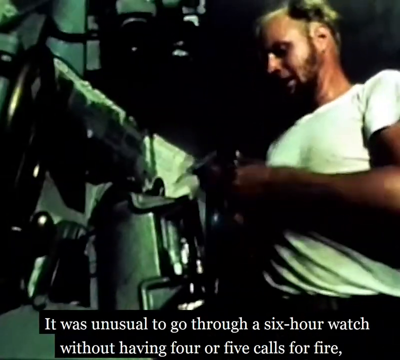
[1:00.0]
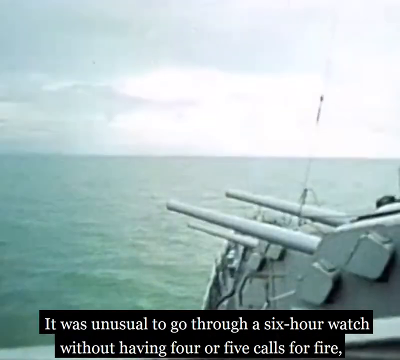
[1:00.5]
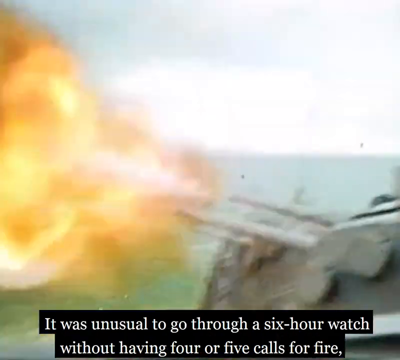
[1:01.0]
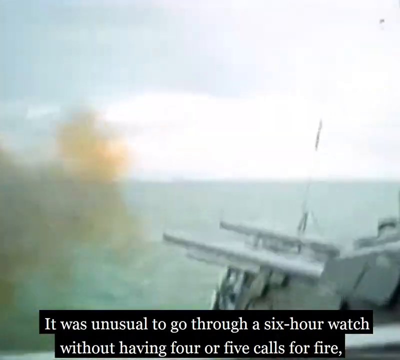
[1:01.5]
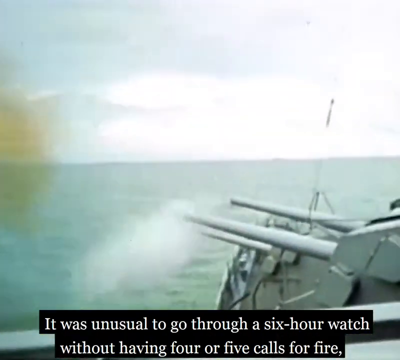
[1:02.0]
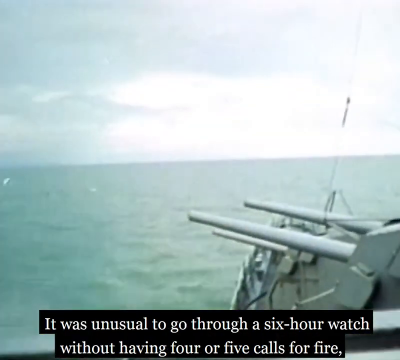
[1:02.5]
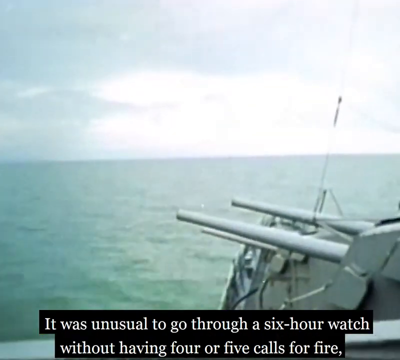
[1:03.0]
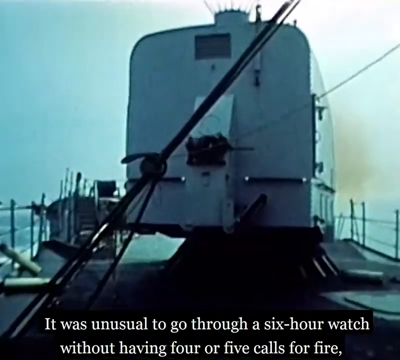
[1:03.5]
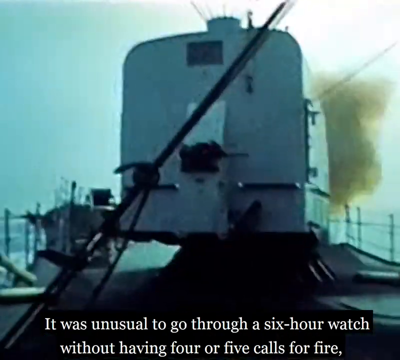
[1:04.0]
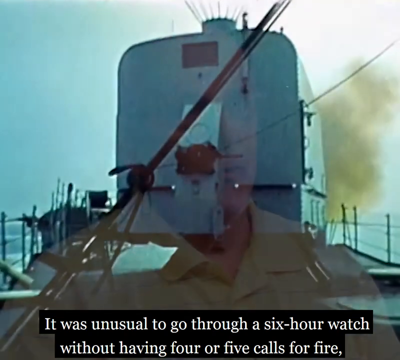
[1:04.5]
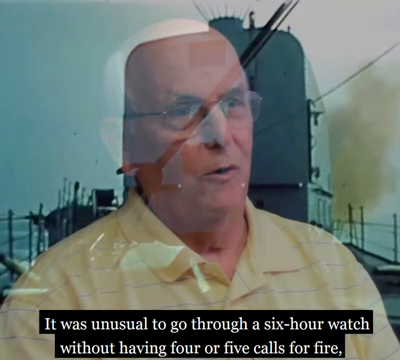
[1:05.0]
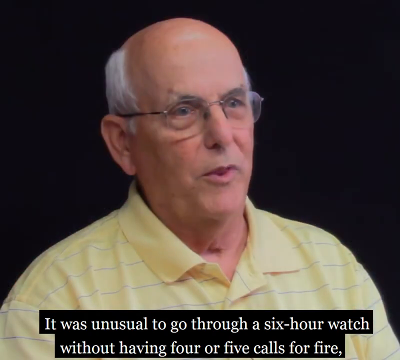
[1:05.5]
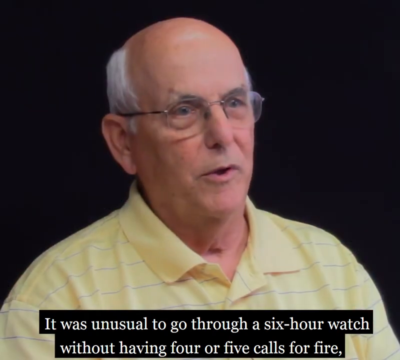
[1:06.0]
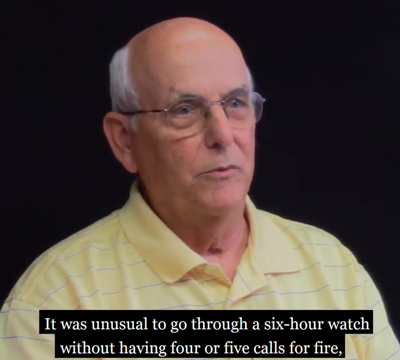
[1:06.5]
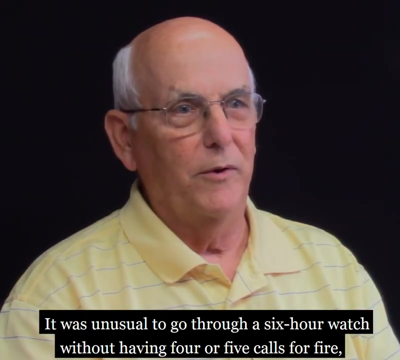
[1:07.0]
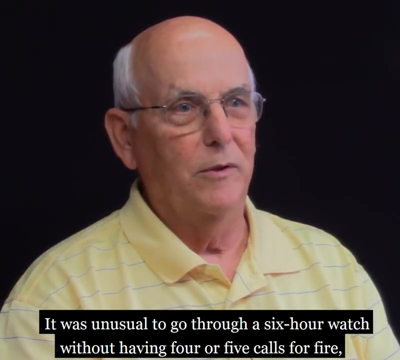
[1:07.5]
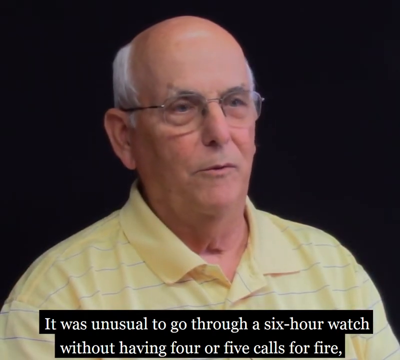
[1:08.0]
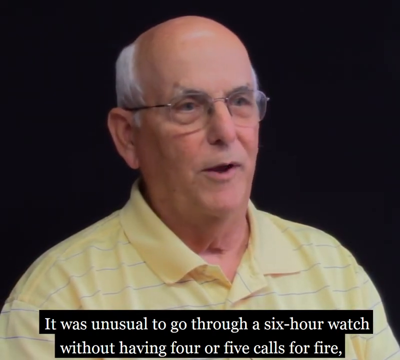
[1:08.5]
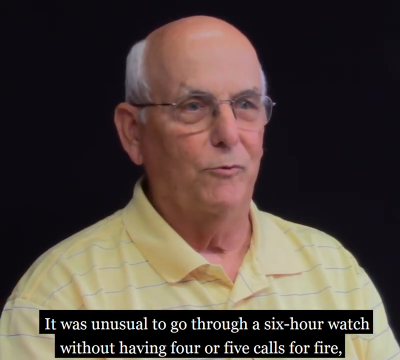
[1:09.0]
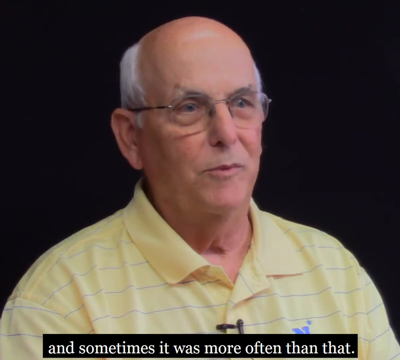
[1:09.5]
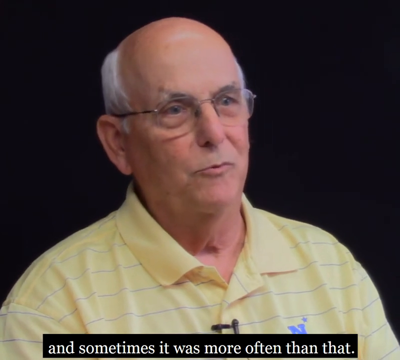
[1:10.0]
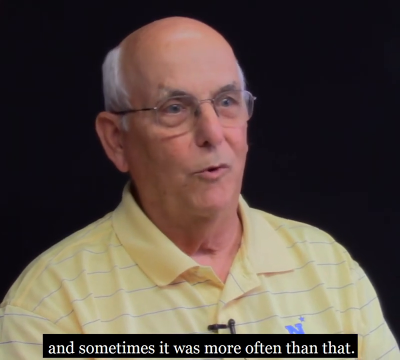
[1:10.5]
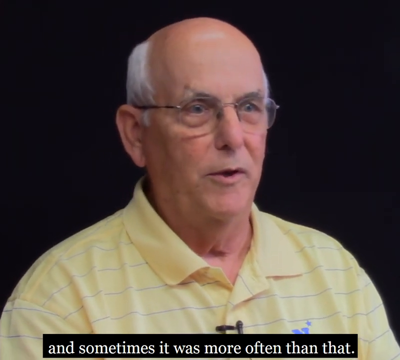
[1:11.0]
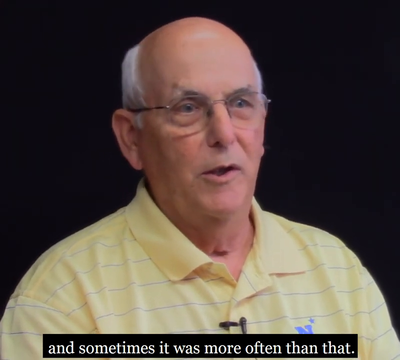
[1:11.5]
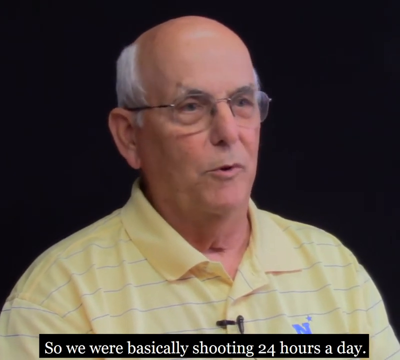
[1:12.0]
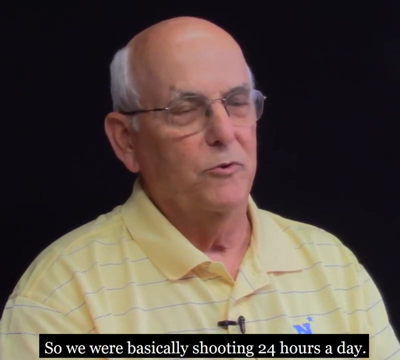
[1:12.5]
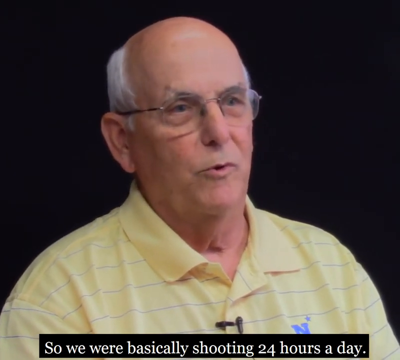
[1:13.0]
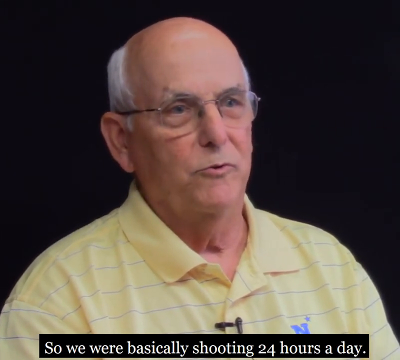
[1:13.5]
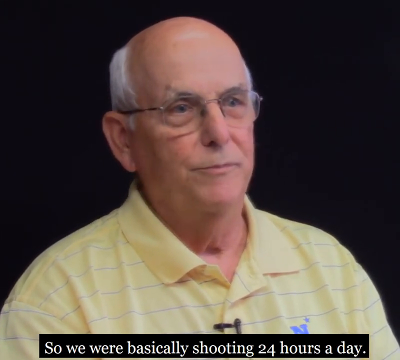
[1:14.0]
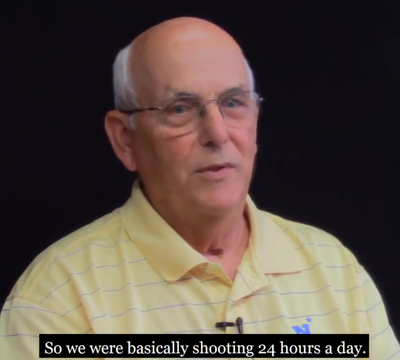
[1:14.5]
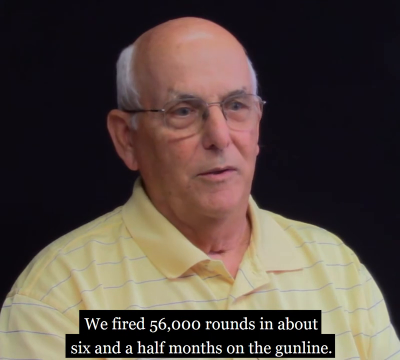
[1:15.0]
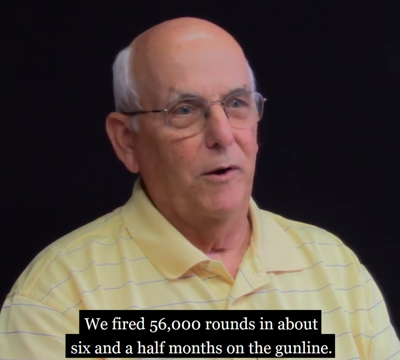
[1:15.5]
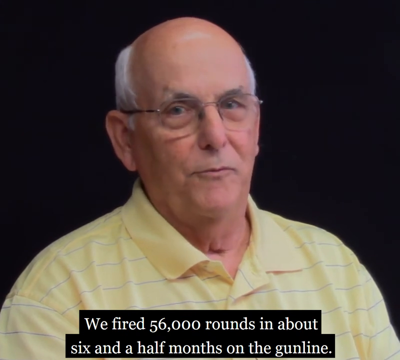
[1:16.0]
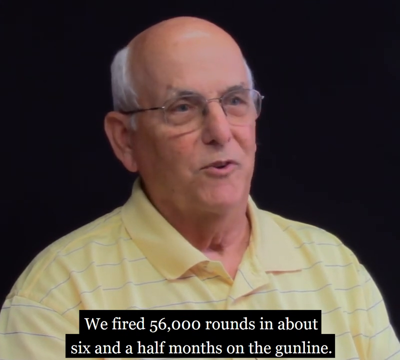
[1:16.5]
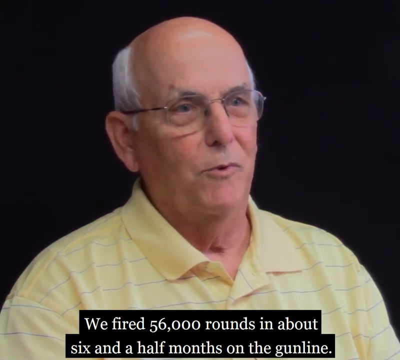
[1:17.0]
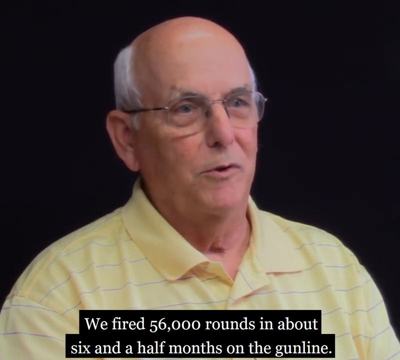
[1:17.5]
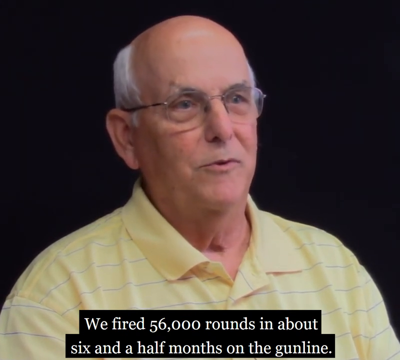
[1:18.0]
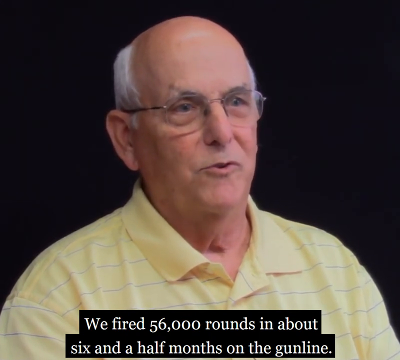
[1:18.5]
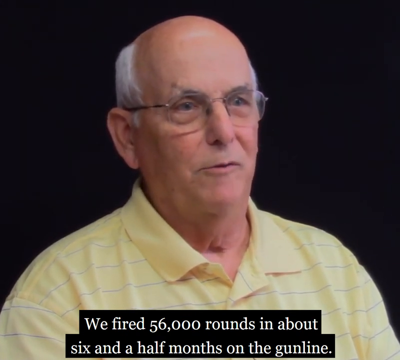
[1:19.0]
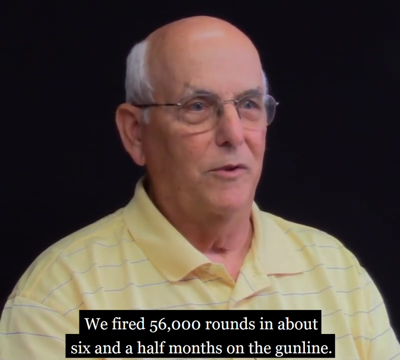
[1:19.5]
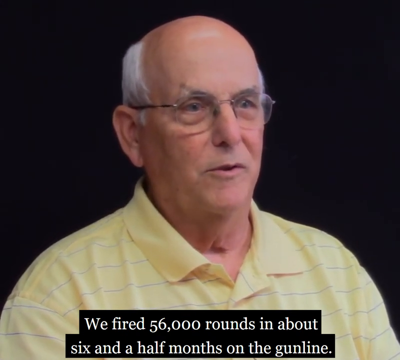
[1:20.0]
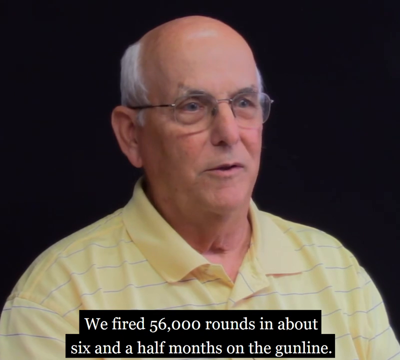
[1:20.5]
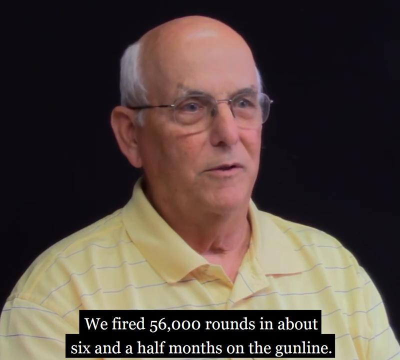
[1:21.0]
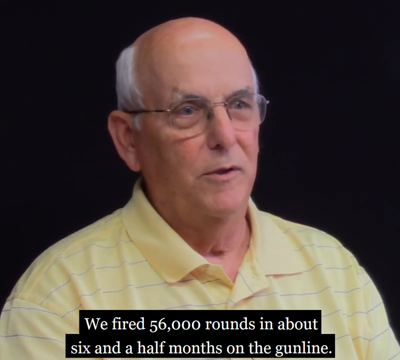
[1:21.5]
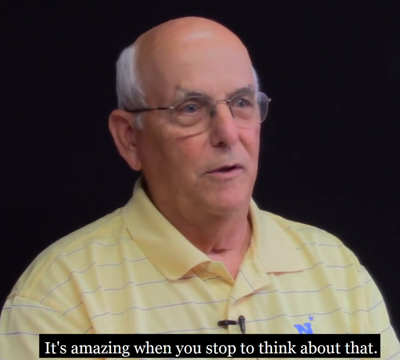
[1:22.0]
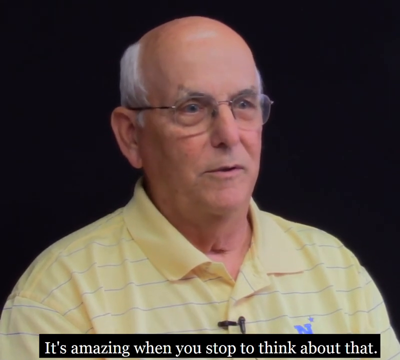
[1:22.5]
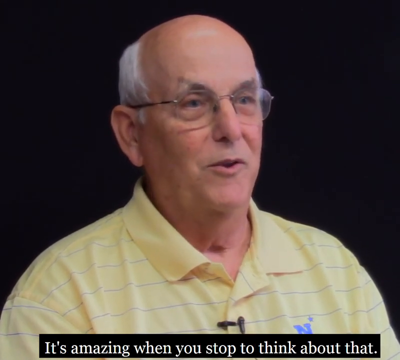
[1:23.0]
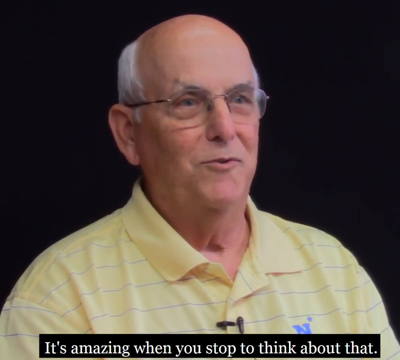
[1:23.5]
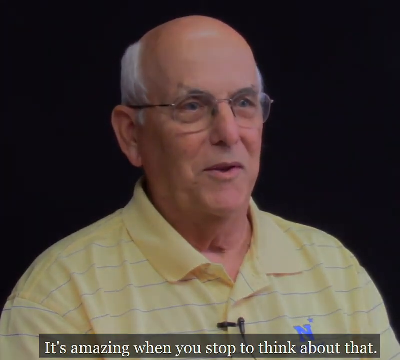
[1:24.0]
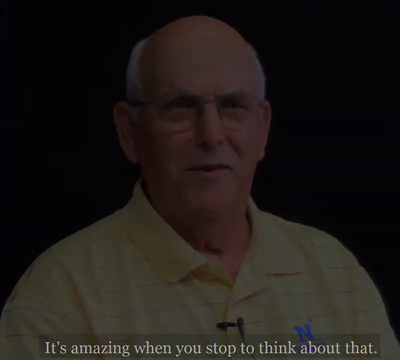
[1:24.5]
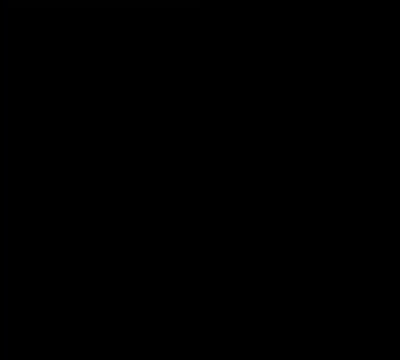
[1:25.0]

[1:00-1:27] The young man with blonde hair, white complexion and a white t-shirt is shown against a black background, with some green material visible. White font in a black square below him reads "it was unusual to go through a six hour watch". The next scene shows gray cannons shooting brown smoke and fire from the shells, with green water and a white and gray clouded sky. The video returns to the older white man with black-rimmed glasses, white hair on the sides, balding, against a black background, in a yellow collared shirt with blue lines. Text underneath reads "it was unusual to go through a six-hour watch without having four, and sometimes it was more than that. So we're basically shooting 24 hours a day. We fired 56,000 rounds in about six and a half months on the gun line. It's amazing to stop to think about it."